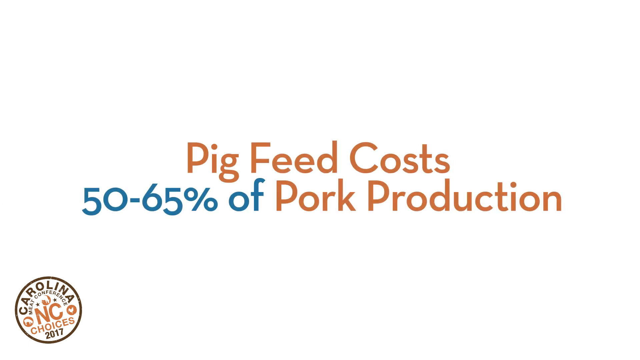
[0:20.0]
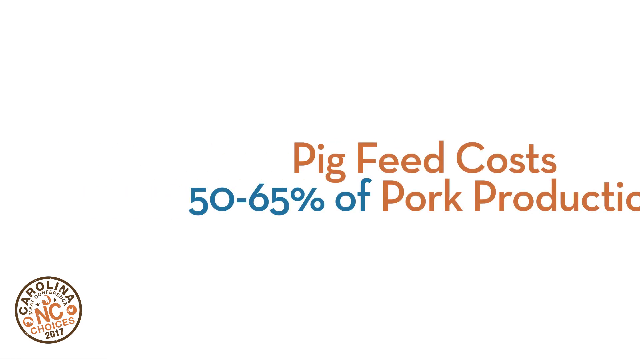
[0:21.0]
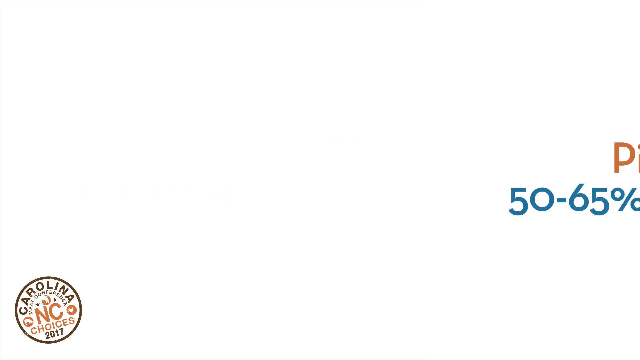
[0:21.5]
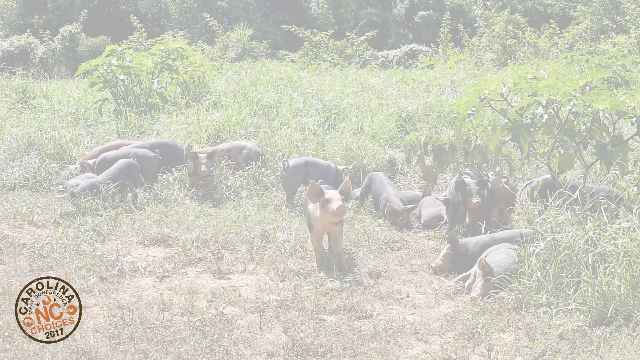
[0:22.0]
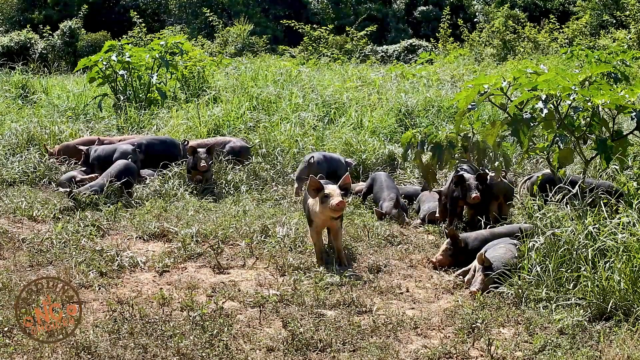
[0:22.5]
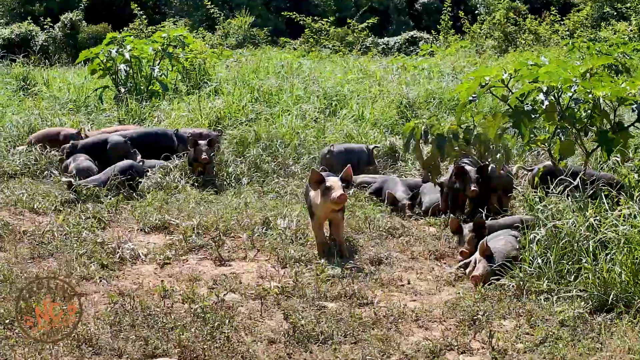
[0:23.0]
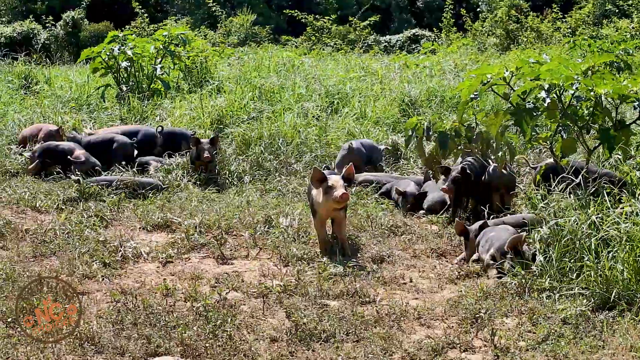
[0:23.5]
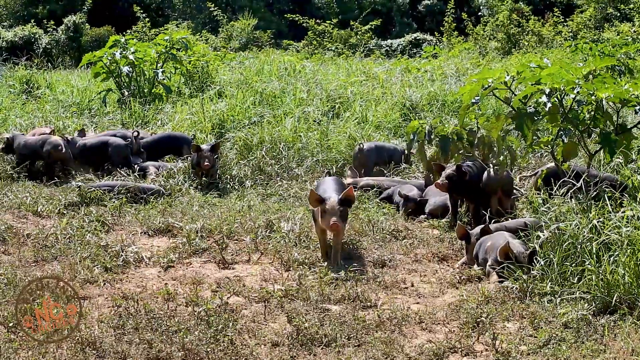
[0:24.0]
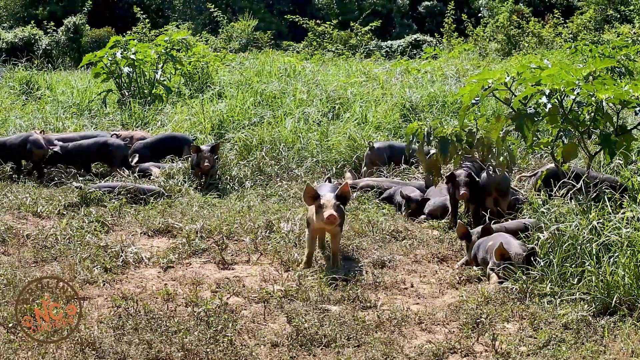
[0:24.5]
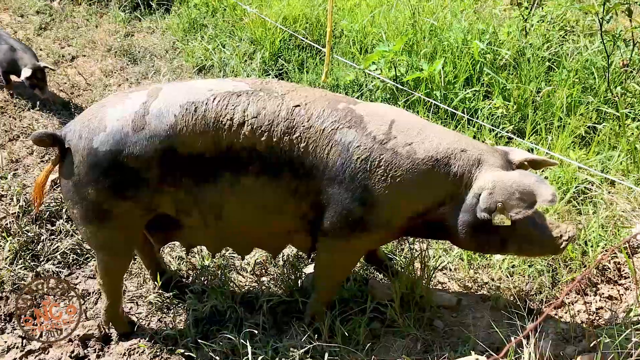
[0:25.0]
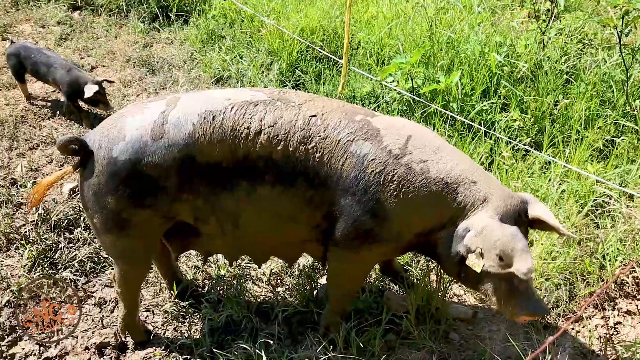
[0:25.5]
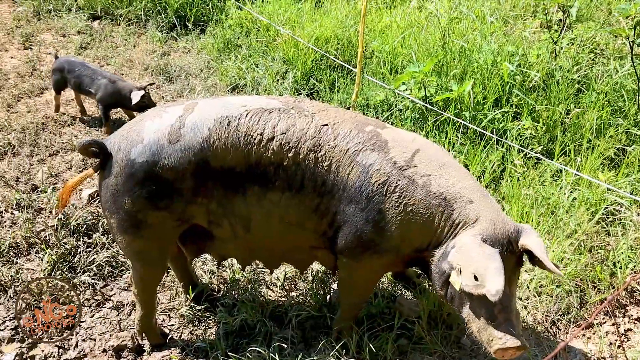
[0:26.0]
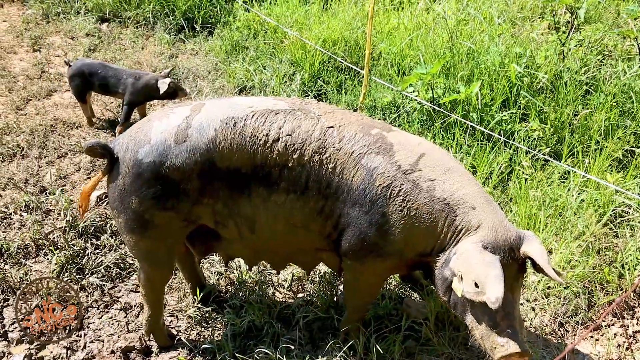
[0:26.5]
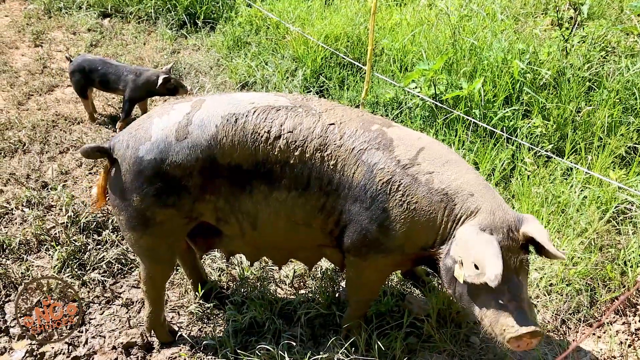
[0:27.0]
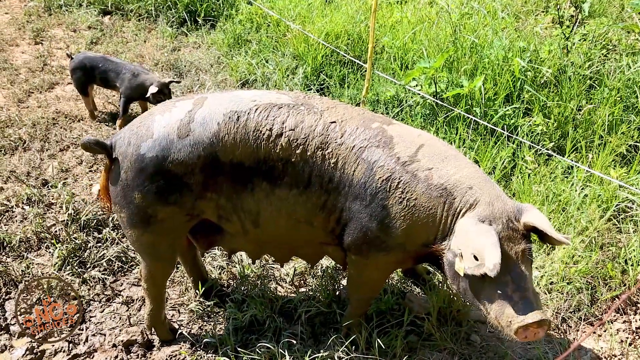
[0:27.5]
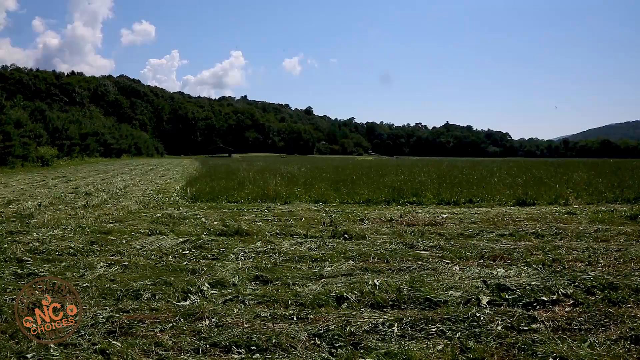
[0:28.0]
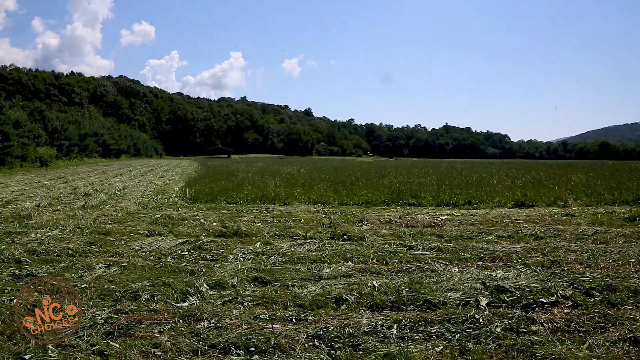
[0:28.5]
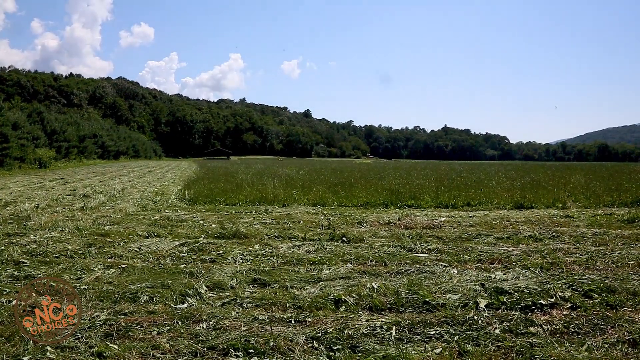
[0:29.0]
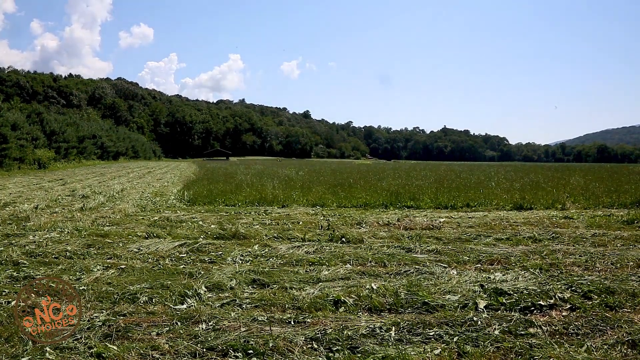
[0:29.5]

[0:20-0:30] An orange header reads "pig feed costs 50 to 65% of pork production," with the words "50 to 65% of" in blue. A small icon in the corner says "Carolina" and apparently has a chicken in it. The header then slips to the left and transitions away to a field of pigs. They all look young, like adolescents, mostly dark black in color, with a couple of lighter-colored ones. Many of them are lying down, but the one in the middle is facing the front, looking alert and looking around. There is a lot of shrubbery and greenery in the back, low-lying bushes, and the pigs are running around. It then transitions to a shot of a mother sow with udders full of milk.